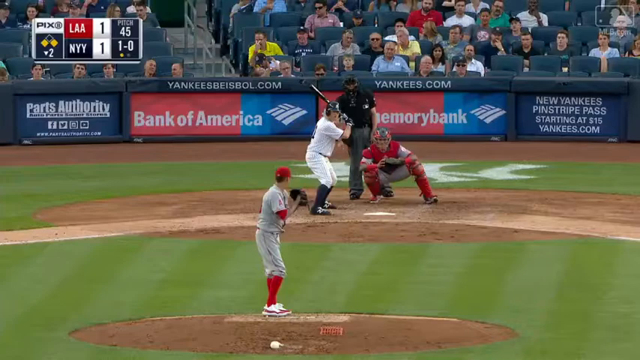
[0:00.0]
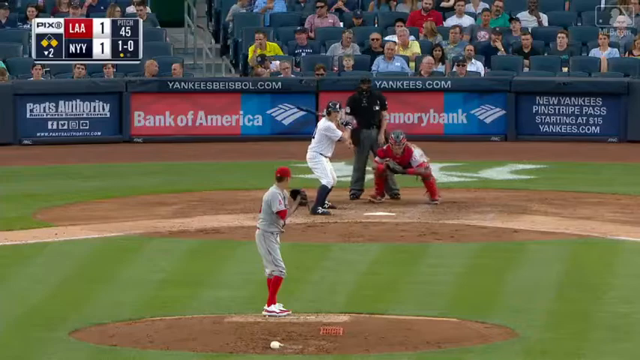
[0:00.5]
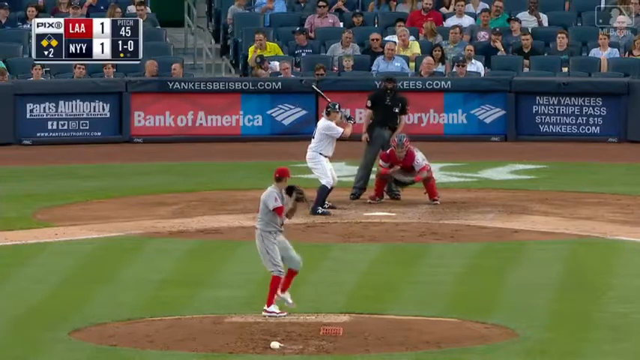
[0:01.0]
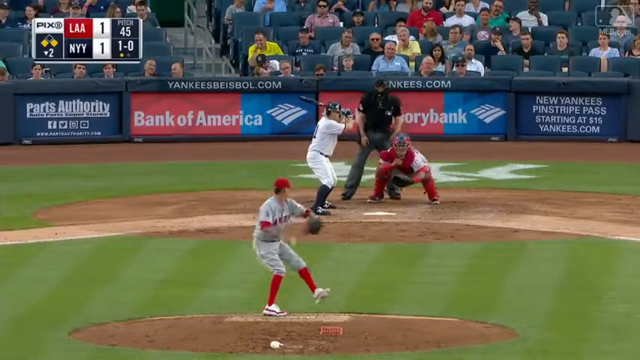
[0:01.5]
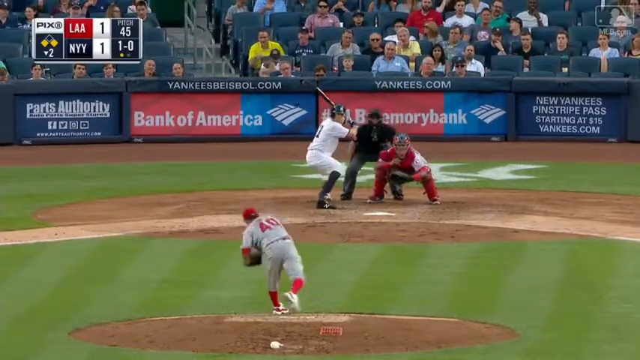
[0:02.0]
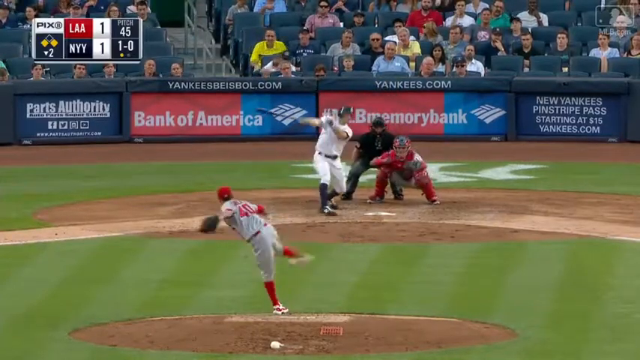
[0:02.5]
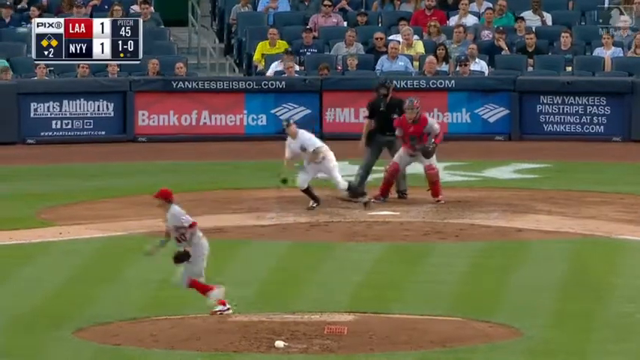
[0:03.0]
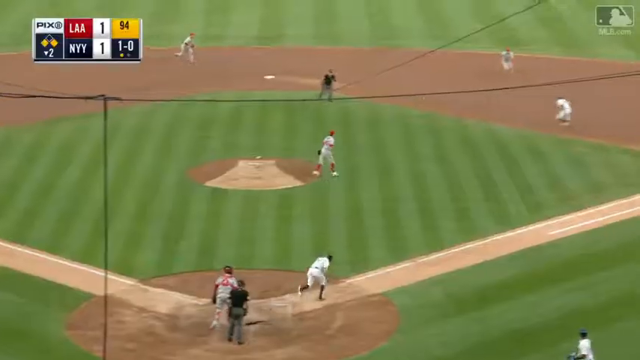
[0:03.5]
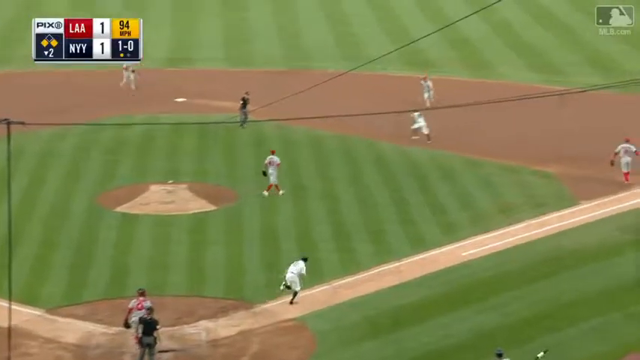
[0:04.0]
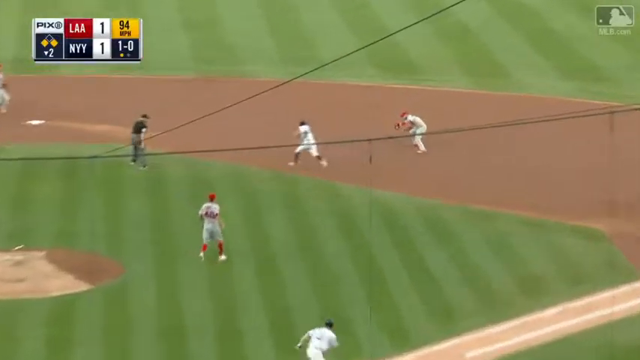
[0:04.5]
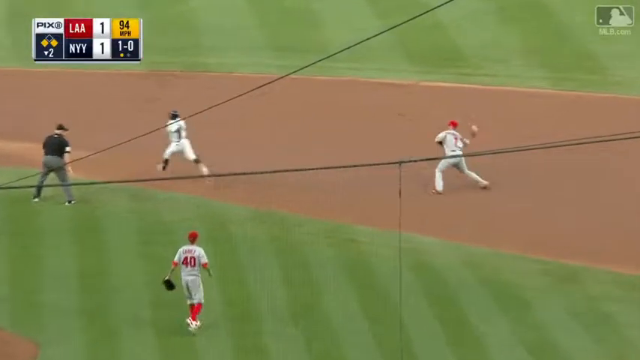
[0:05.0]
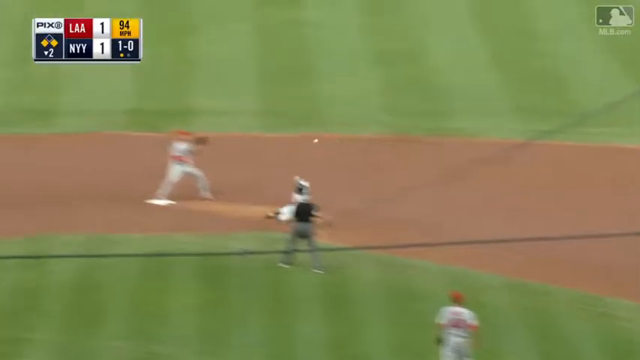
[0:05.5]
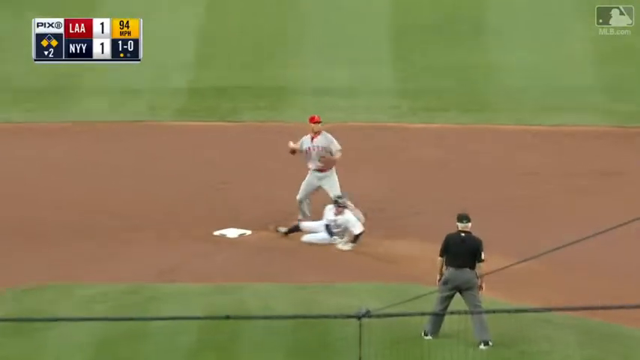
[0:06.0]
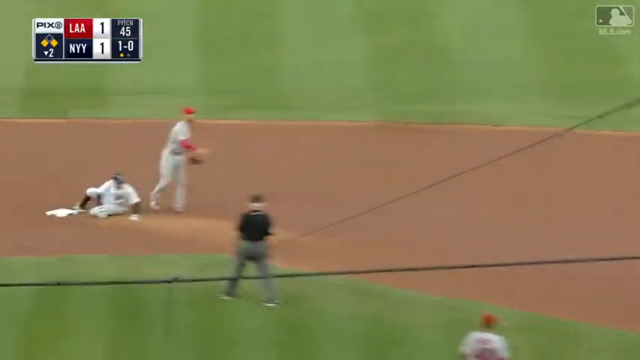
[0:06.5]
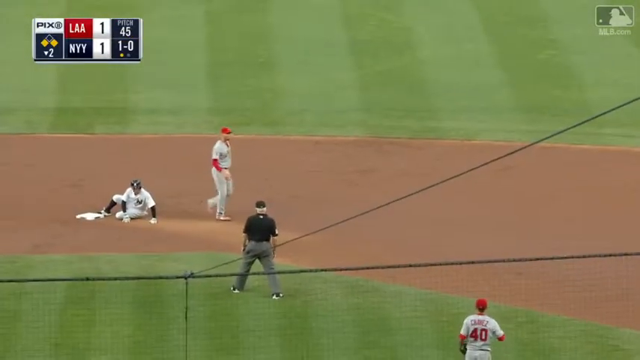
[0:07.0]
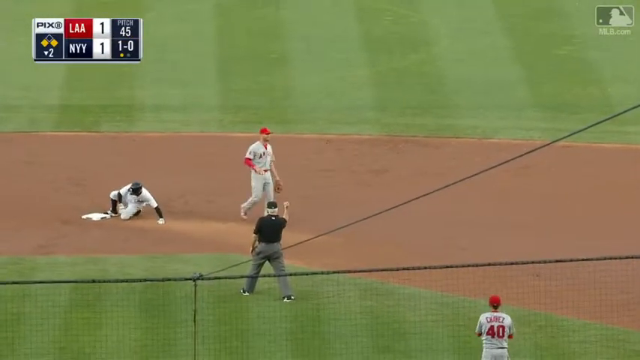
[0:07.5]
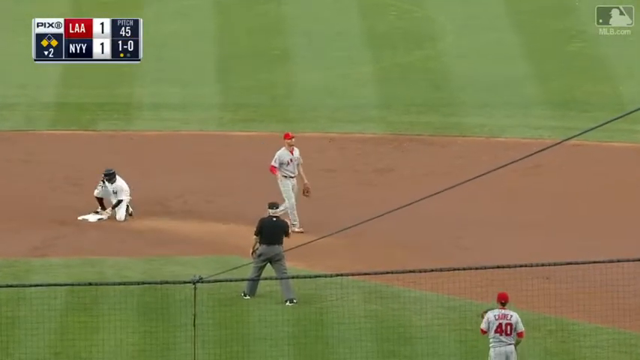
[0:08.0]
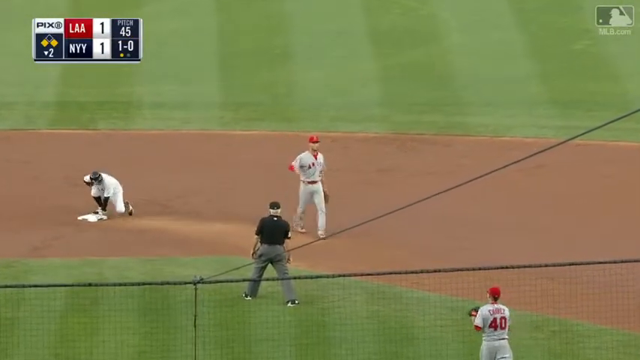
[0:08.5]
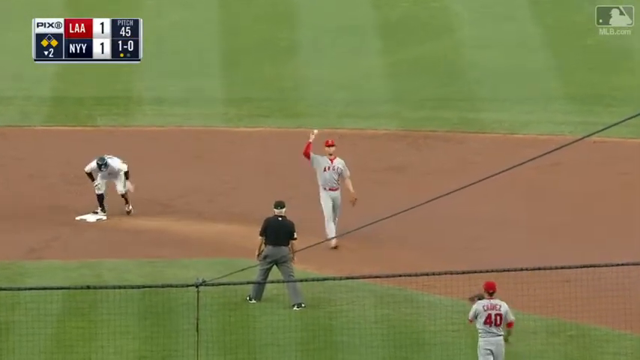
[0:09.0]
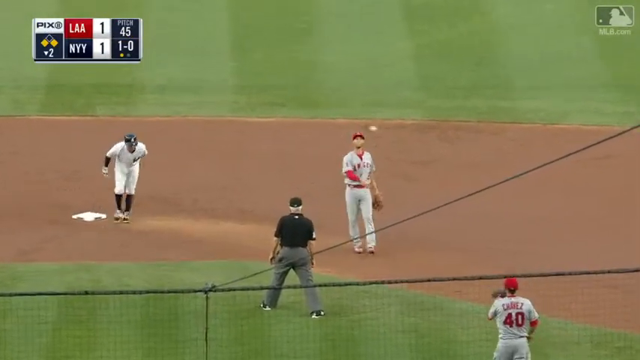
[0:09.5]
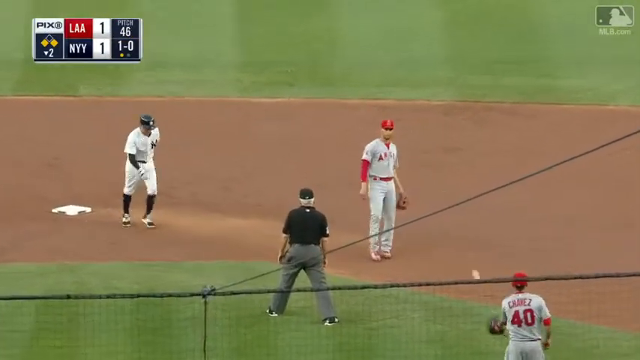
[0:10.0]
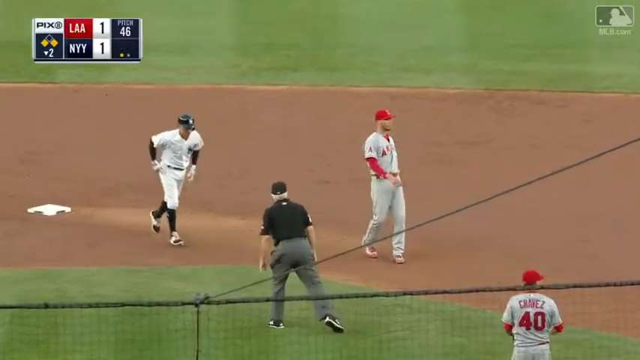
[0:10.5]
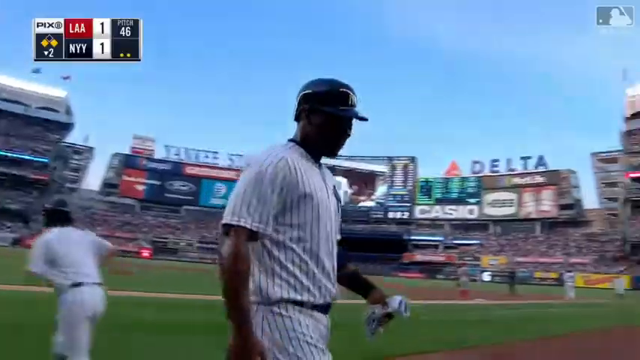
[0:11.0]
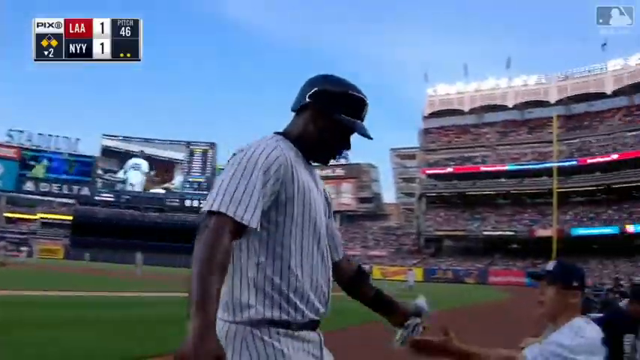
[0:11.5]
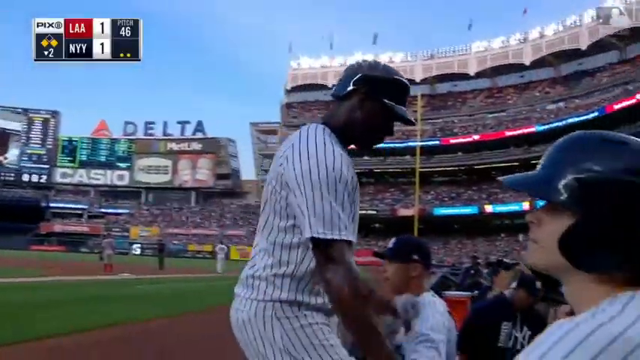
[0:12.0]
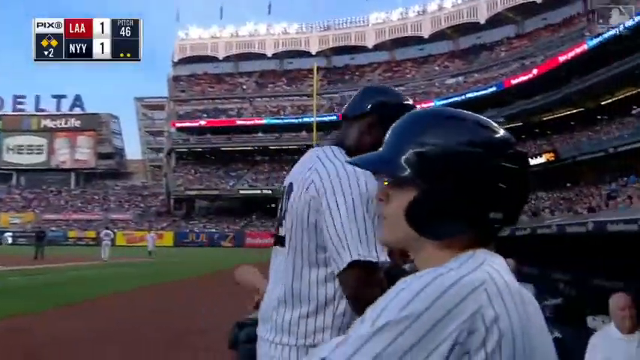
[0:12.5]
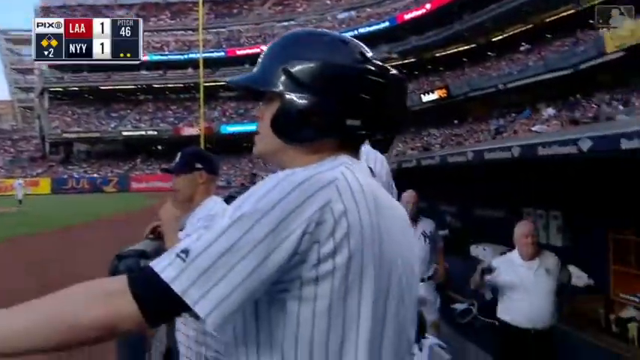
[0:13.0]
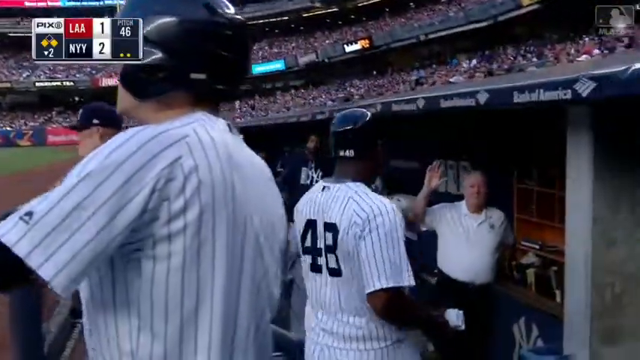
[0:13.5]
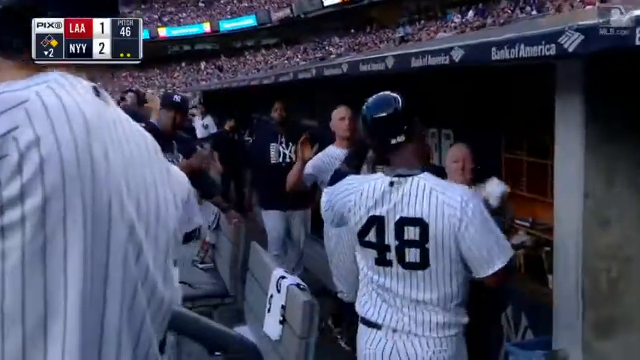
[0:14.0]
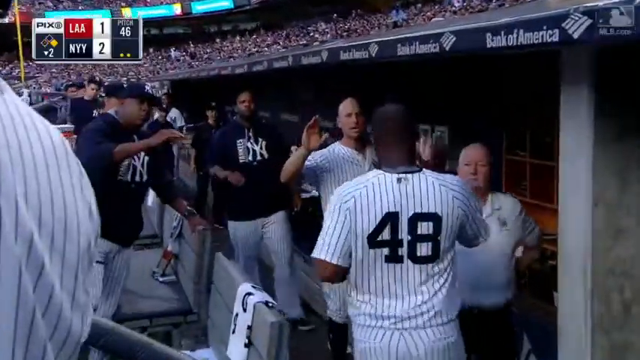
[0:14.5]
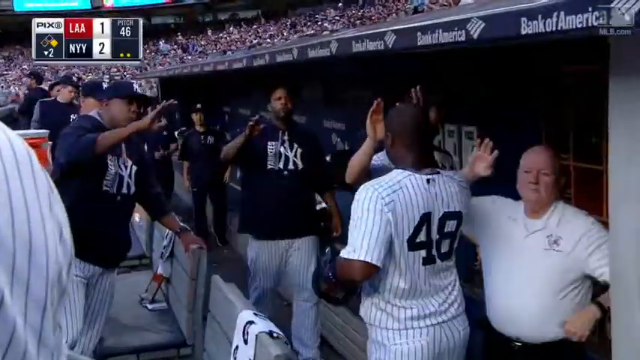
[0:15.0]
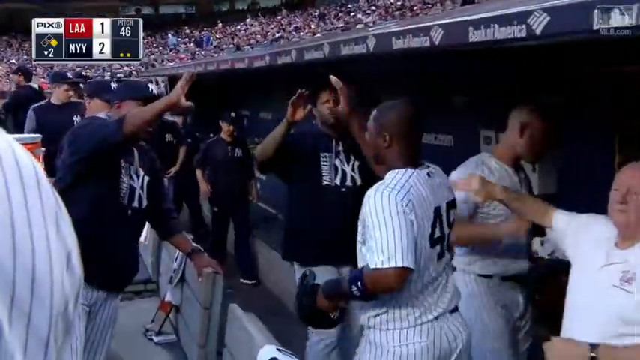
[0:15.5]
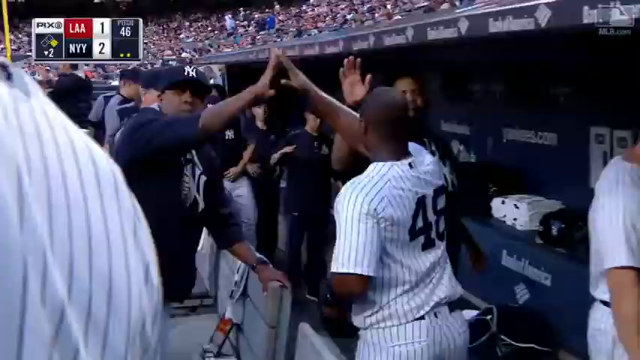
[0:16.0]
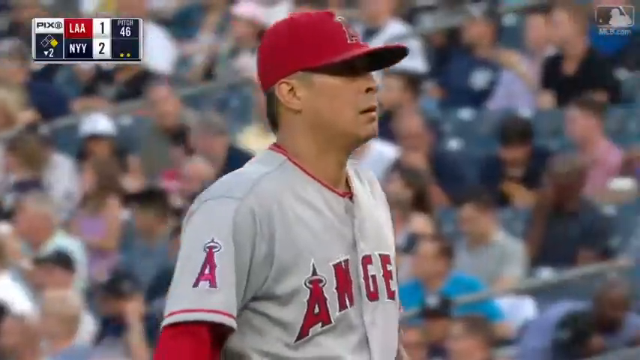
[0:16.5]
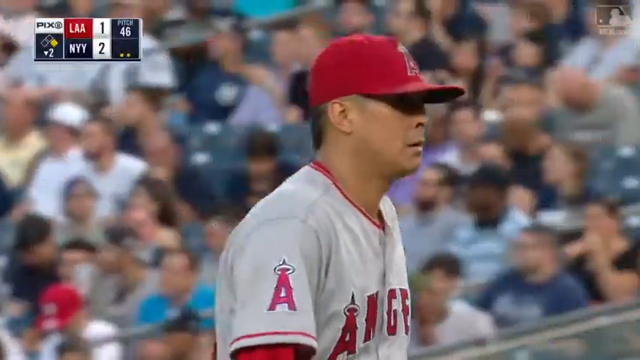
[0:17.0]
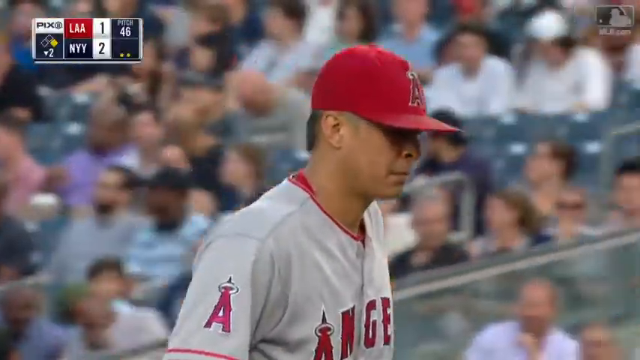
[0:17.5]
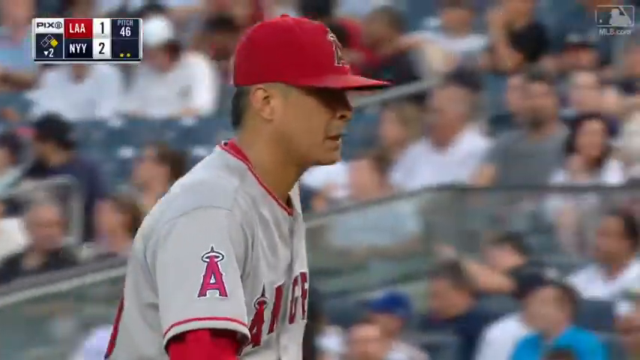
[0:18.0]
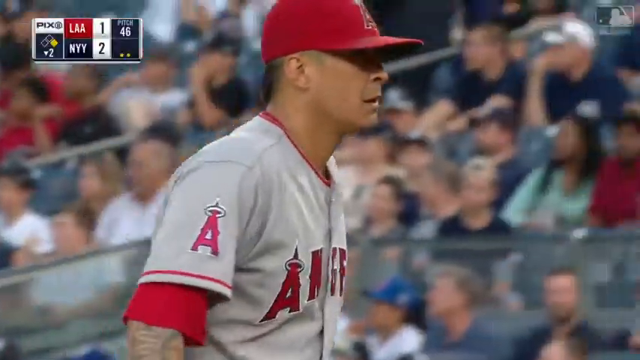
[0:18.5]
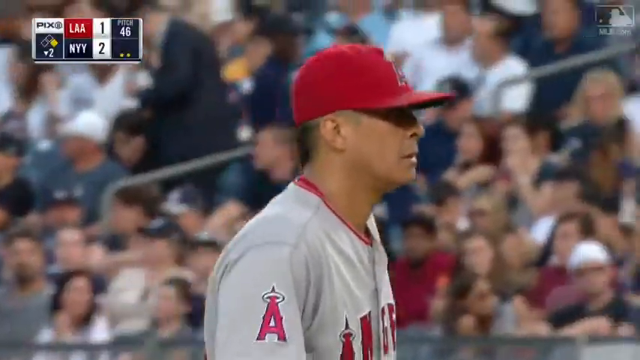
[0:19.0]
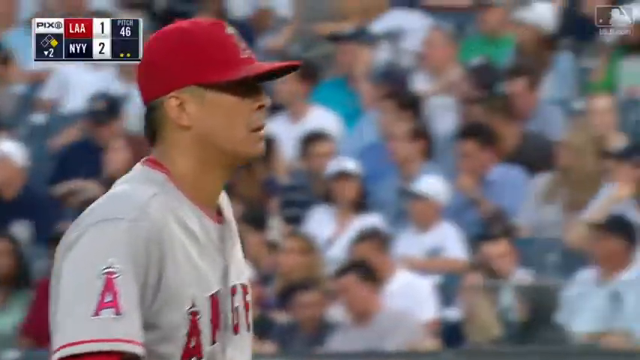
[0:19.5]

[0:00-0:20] A baseball game is on screen, with "LAA" (Los Angeles Angels) and "NYY" (New York Yankees) shown. The Angels appear to be pitching, since they are wearing red. Ronald is up to bat; he is on the left side and left-handed, with the umpire on the other side. A player lifts up his left leg, bending it, while his right knee is slightly bent, then pulls his right arm back and throws; the ball is in his right hand and the mitt is on his left hand. The batter then appears to be out, as one person catches the ball and throws it to another. A player, apparently number 48, runs off while people are still giving high fives. After a high five, the shot zooms in on the face of one player from Los Angeles, possibly the pitcher, Andrew Sane.